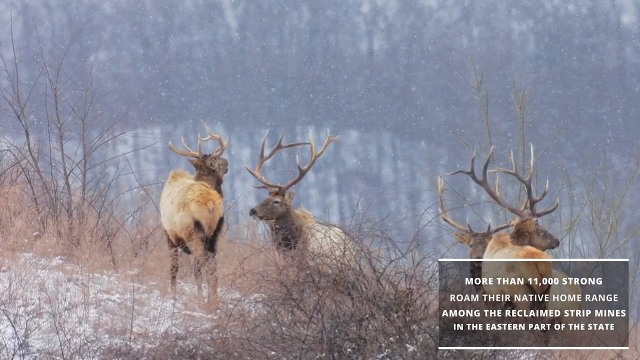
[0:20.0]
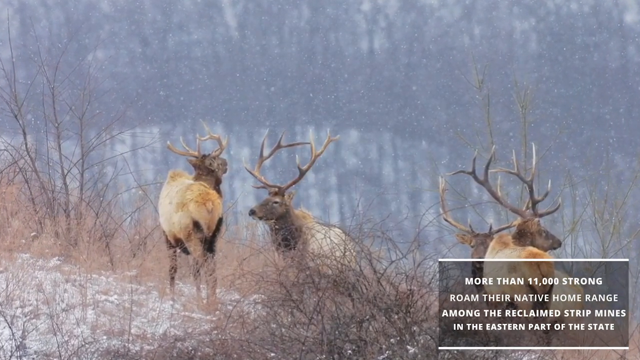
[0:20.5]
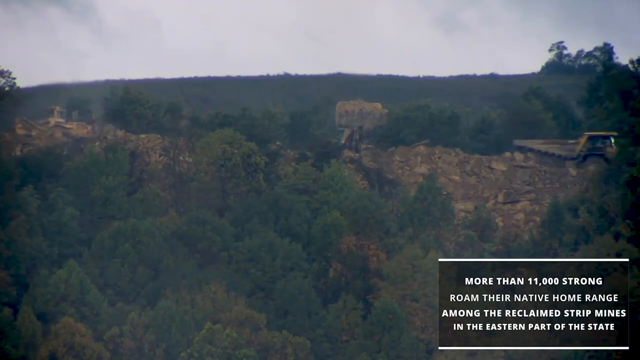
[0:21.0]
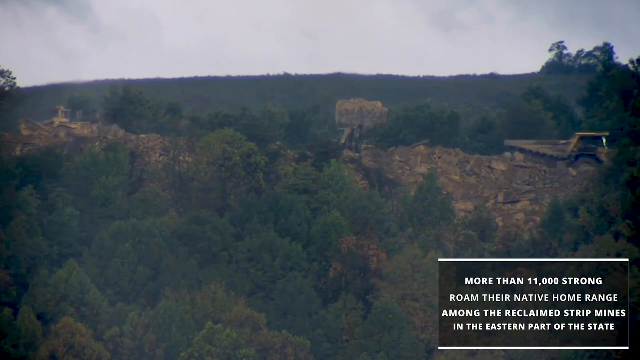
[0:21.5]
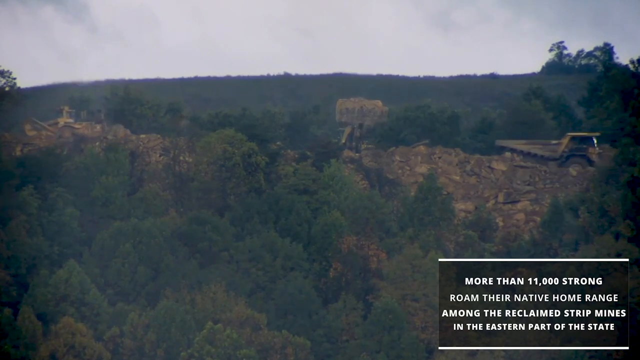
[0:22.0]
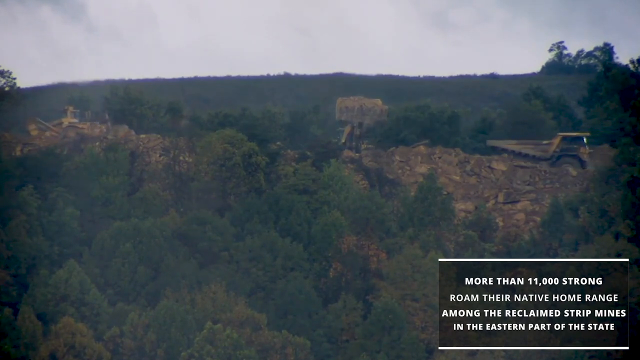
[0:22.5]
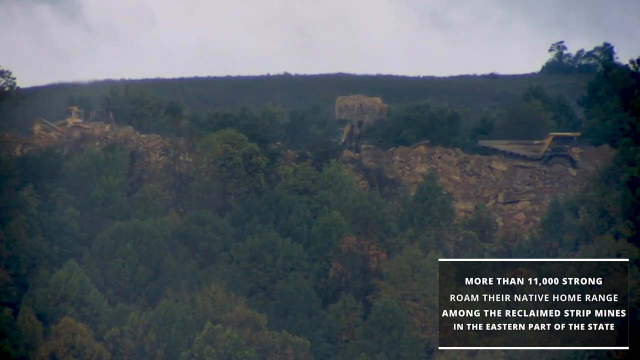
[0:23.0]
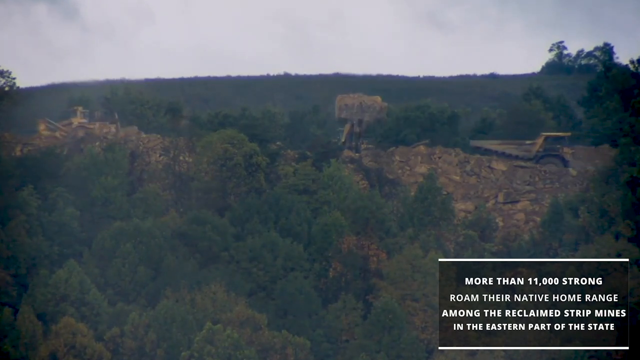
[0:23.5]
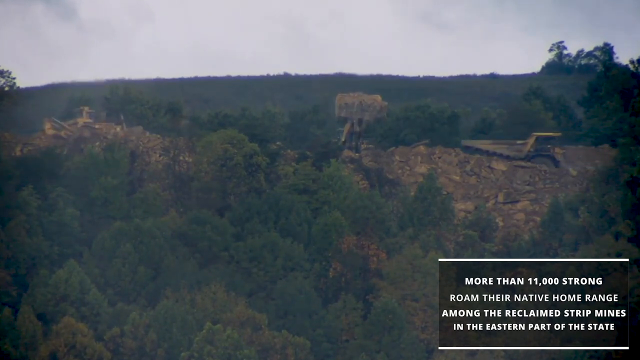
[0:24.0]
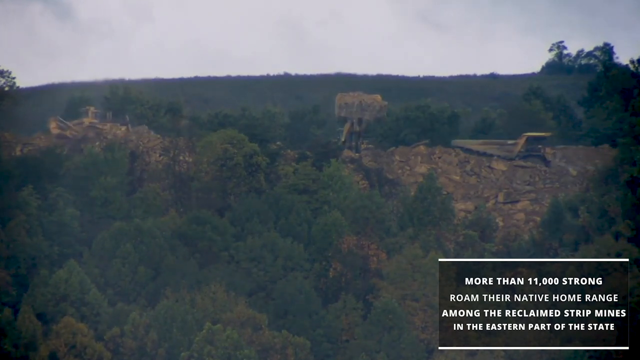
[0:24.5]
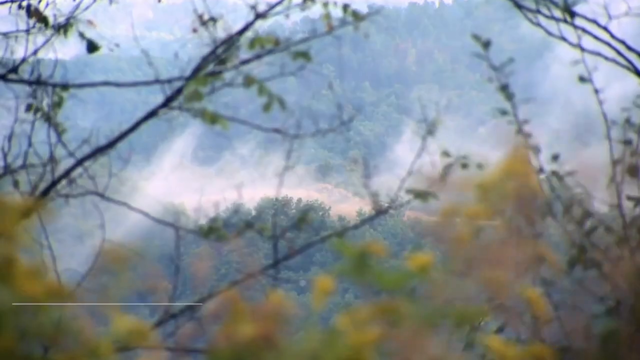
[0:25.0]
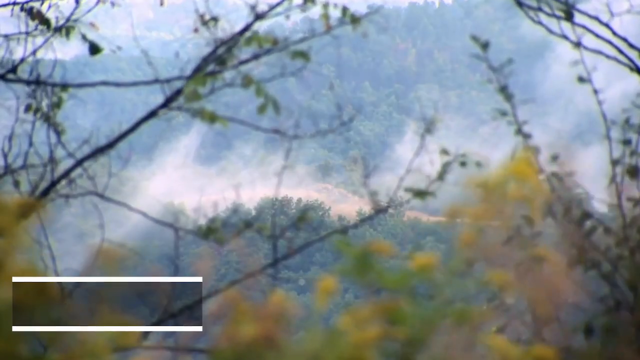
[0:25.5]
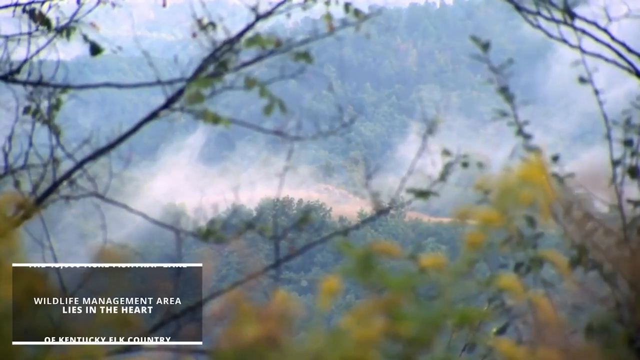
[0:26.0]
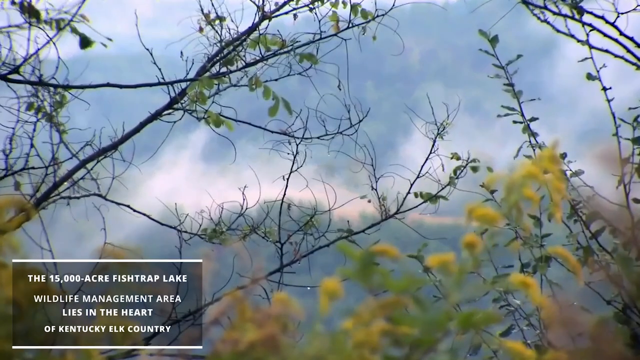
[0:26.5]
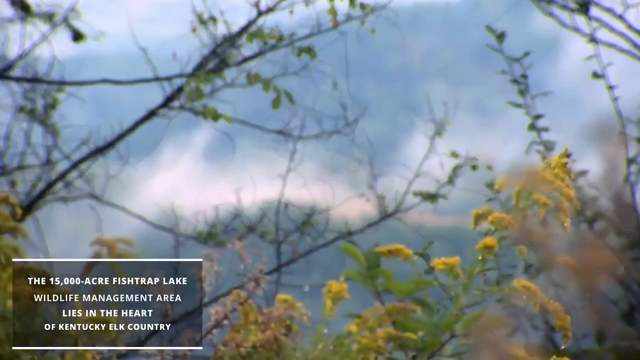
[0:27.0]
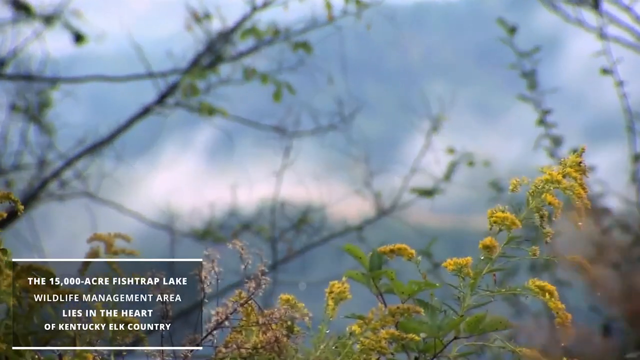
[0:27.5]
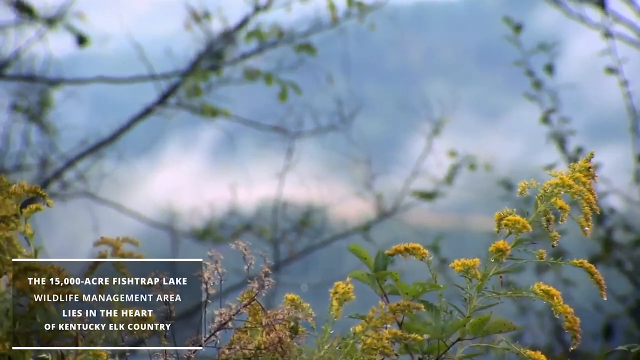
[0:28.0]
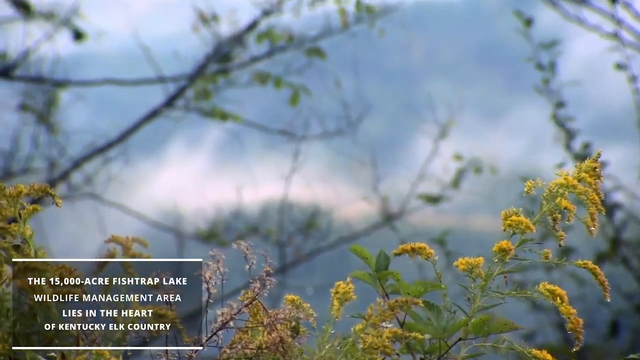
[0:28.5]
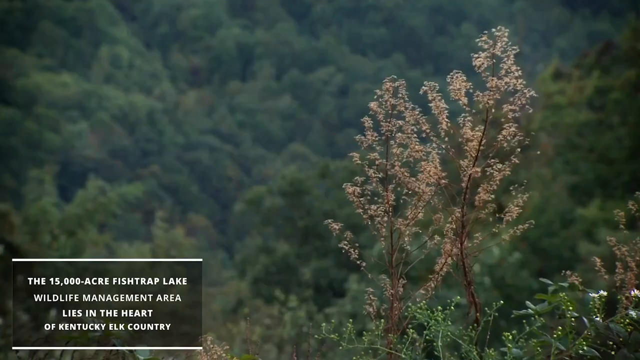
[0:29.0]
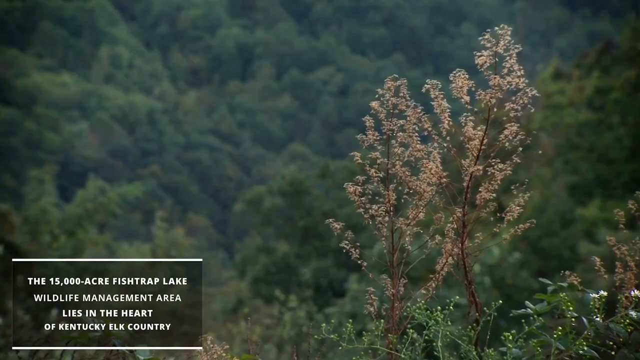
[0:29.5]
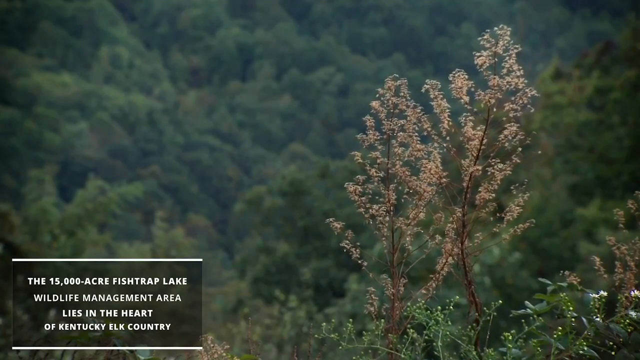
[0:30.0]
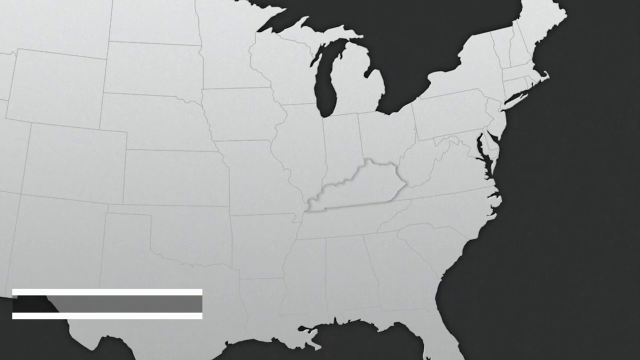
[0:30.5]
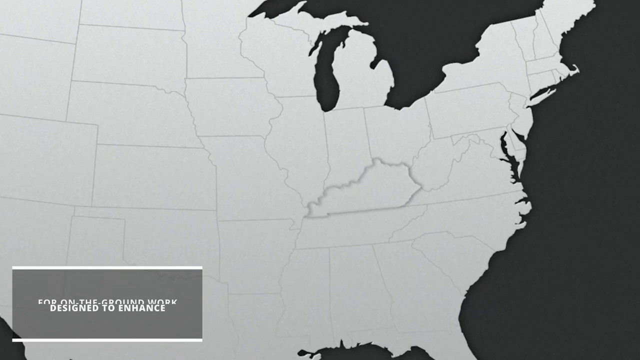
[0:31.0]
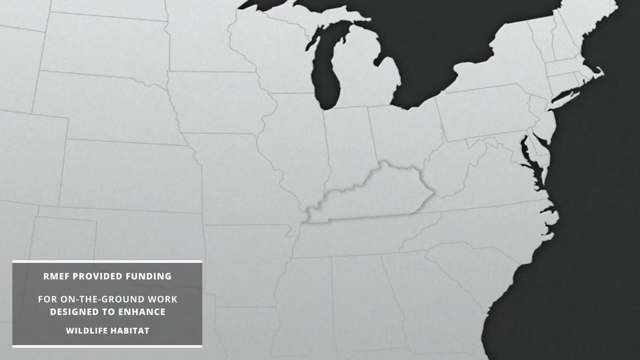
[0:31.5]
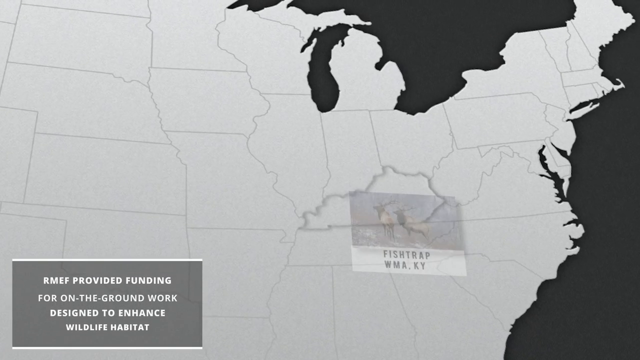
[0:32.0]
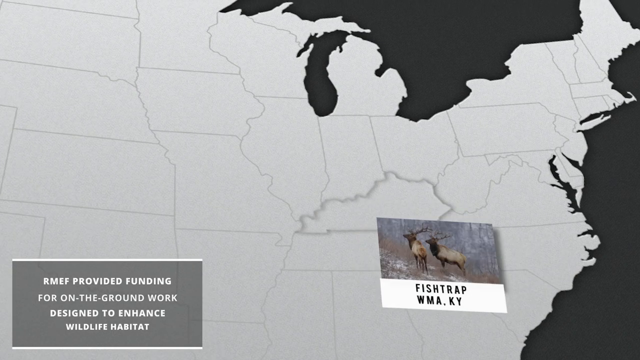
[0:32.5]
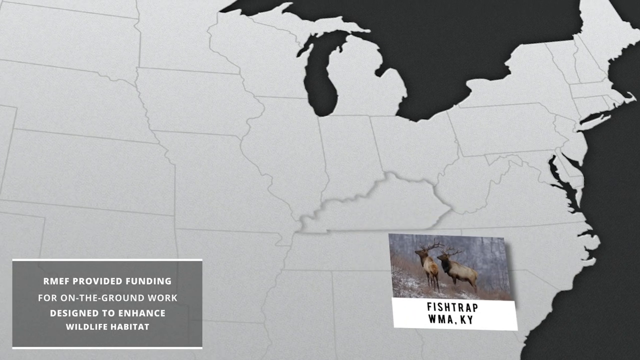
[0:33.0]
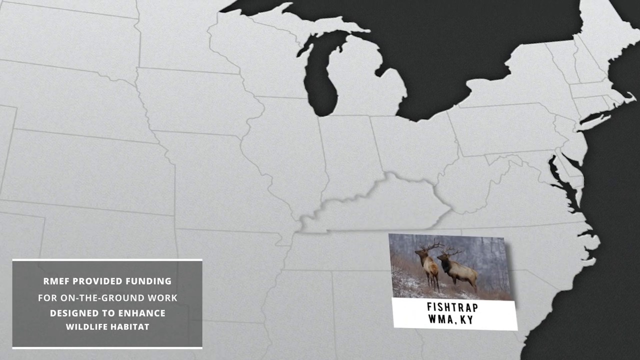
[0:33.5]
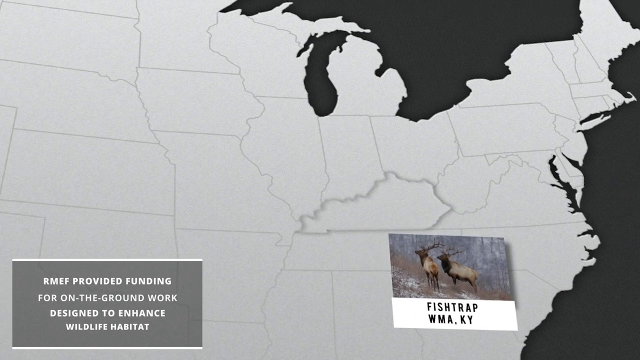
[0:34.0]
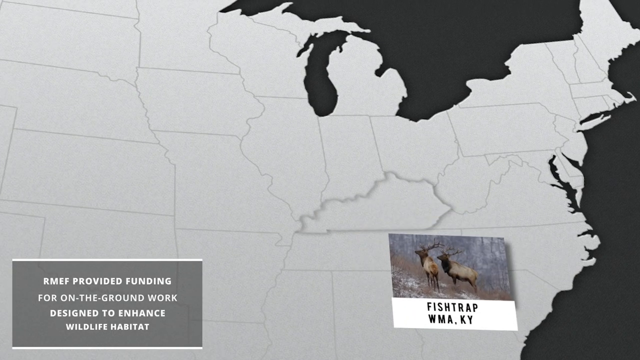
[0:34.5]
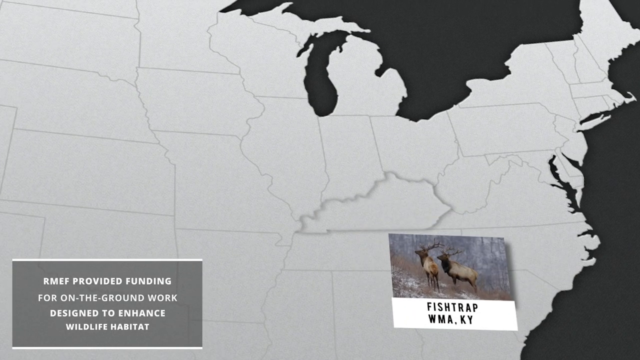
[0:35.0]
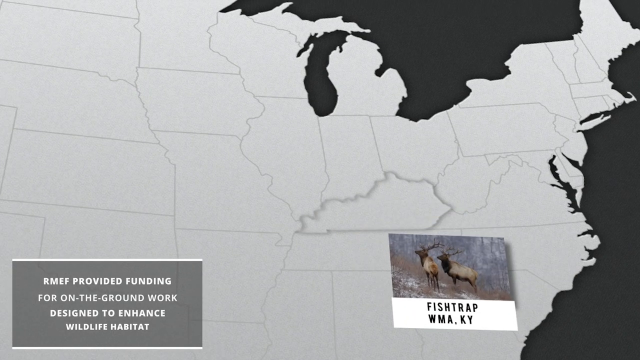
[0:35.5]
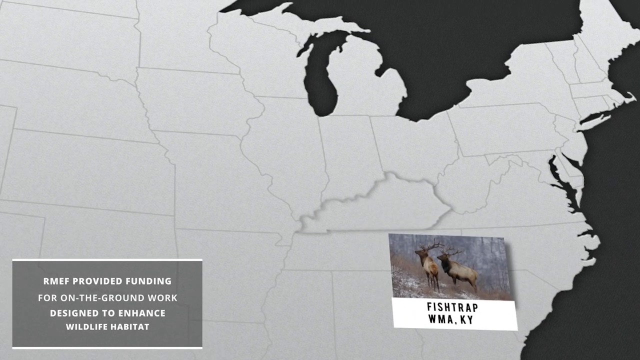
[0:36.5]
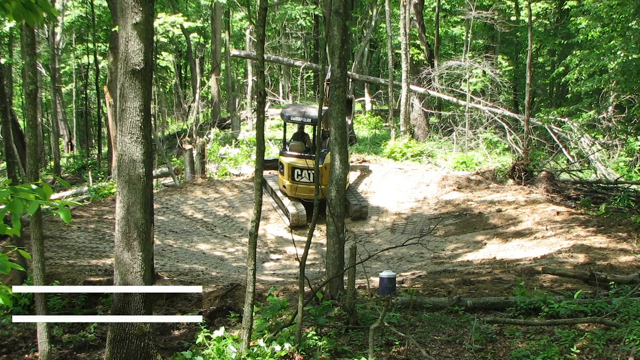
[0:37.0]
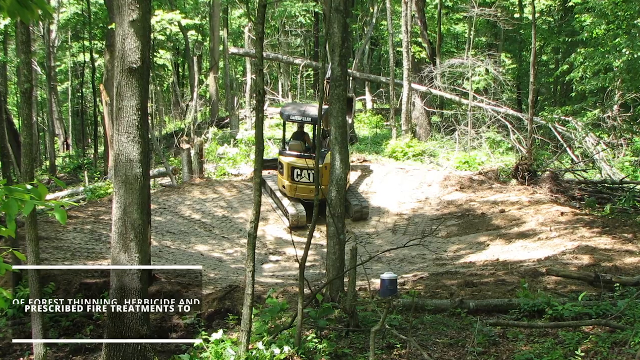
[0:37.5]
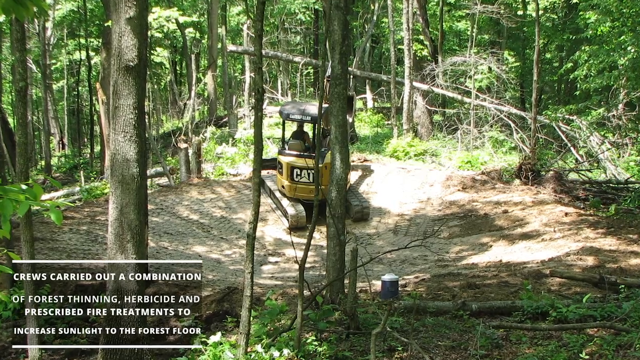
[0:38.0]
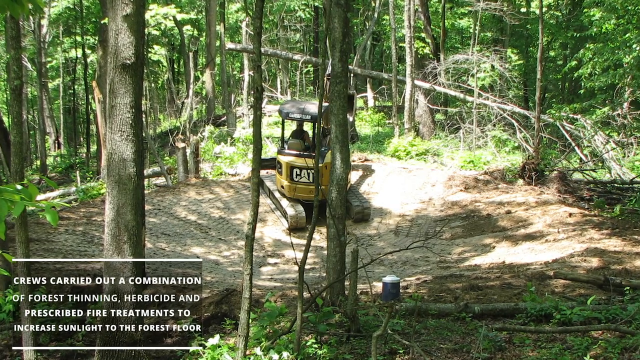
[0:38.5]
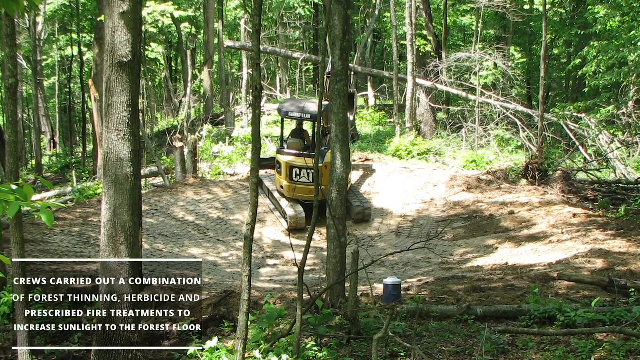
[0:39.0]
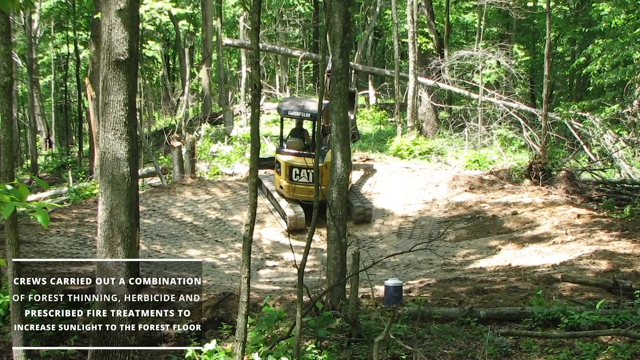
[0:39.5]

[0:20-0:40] A static image of four elk standing around is shown, and the view zooms in on it slightly. It then cuts to video of trucks backing up at what appears to be a construction or mining site, with text at the bottom mentioning 11,000 roaming their home range. Next comes what appears to be a clearing in the brush with dust or dirt coming up behind it; the focus is on the plants in front of the brush, and text in the bottom left-hand corner reads "The 15,000 acre fishtrap lake wildlife management area lies in the heart of Kentucky elk country". Another image of a plant follows, then a cut to a map of the United States that zooms in on one state. Text in the bottom left reads "RMEF provided funding for on-the-ground work designed to enhance wildlife habitat". Out of the image of the state comes a picture of two elk with the text "Fishtrap WMA, KY". This changes to a machine in a forest, with white text reading "Crews carried out a combination of forest thinning, herbicide, and prescribed fire treatments to increase sunlight to the forest floor."